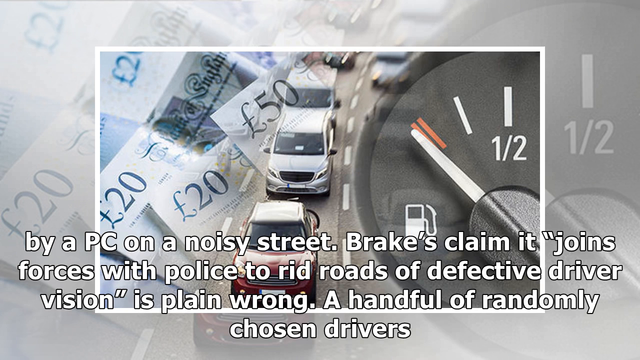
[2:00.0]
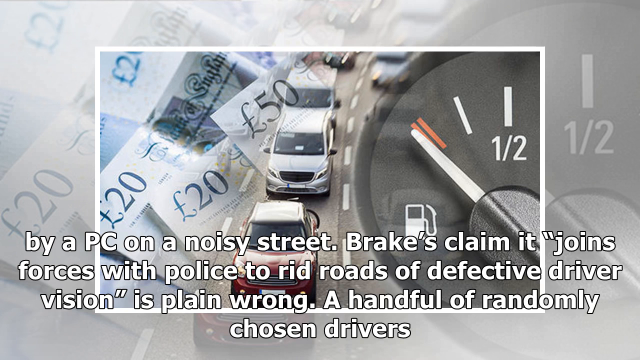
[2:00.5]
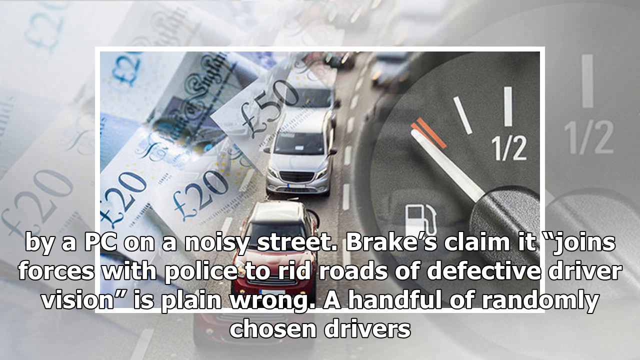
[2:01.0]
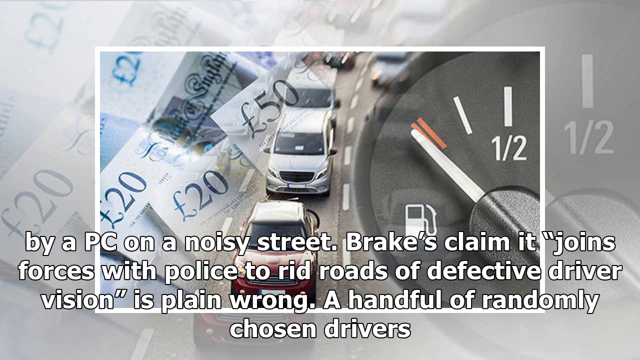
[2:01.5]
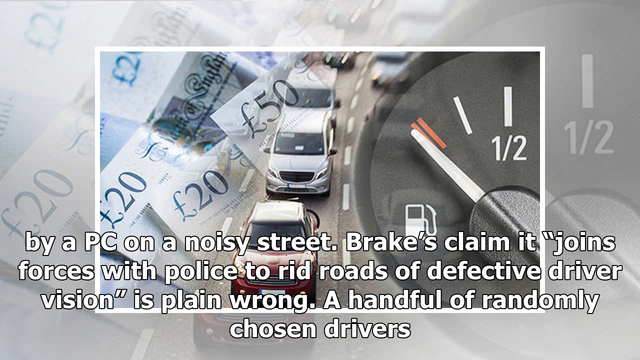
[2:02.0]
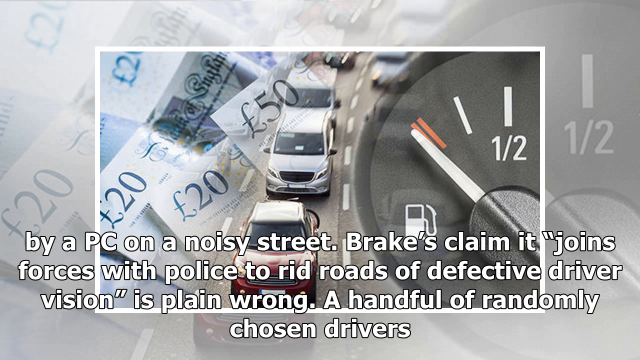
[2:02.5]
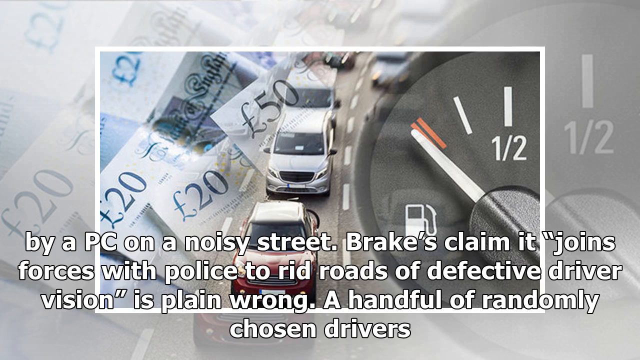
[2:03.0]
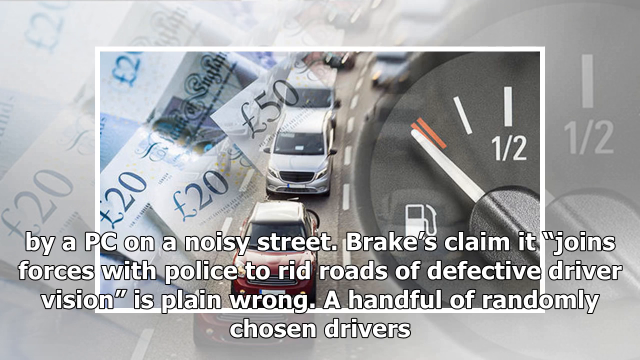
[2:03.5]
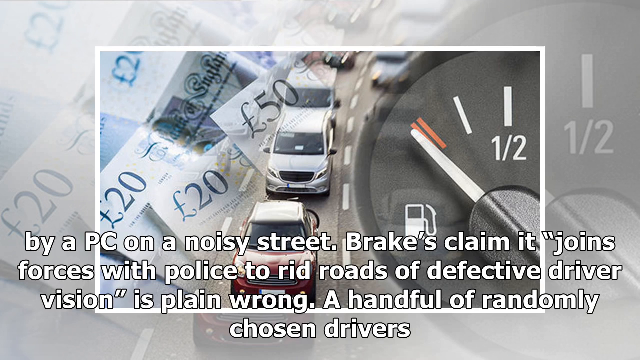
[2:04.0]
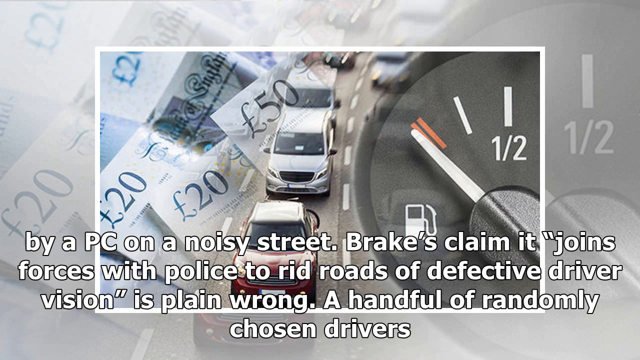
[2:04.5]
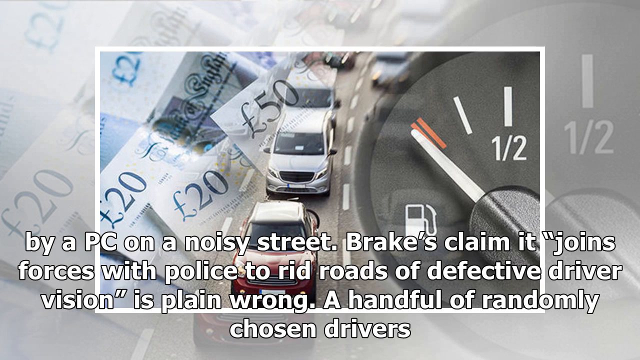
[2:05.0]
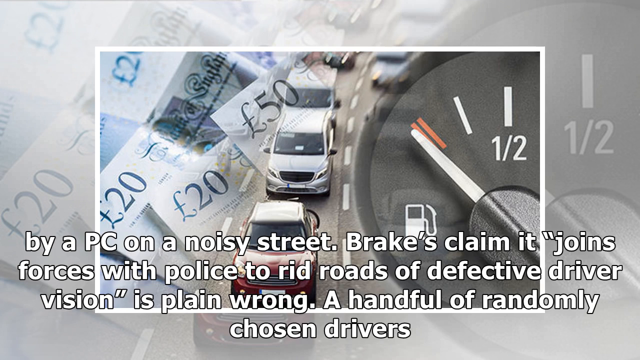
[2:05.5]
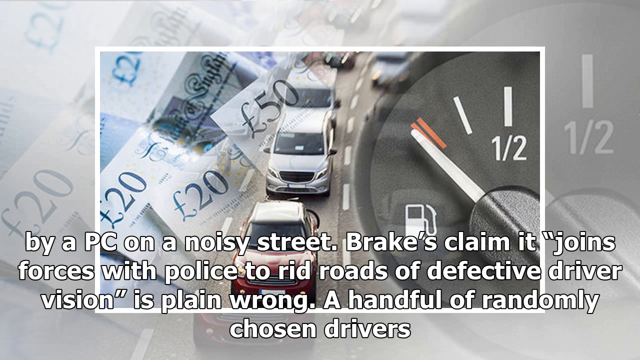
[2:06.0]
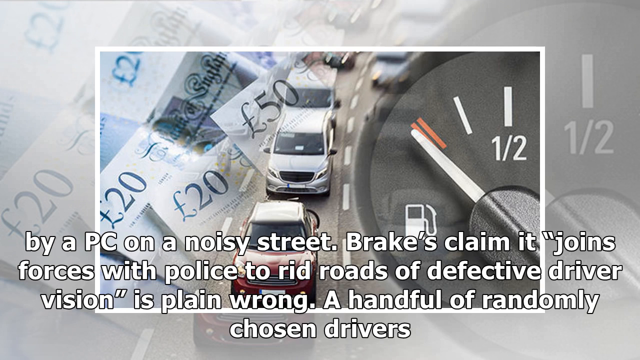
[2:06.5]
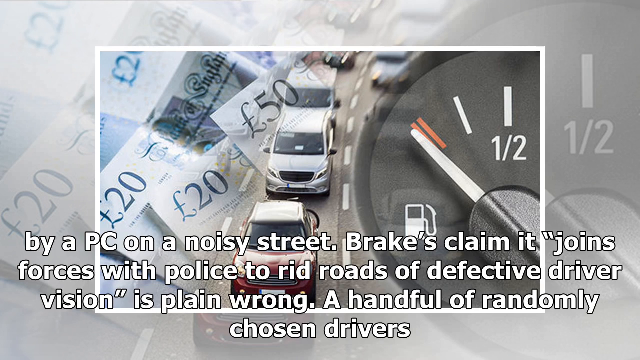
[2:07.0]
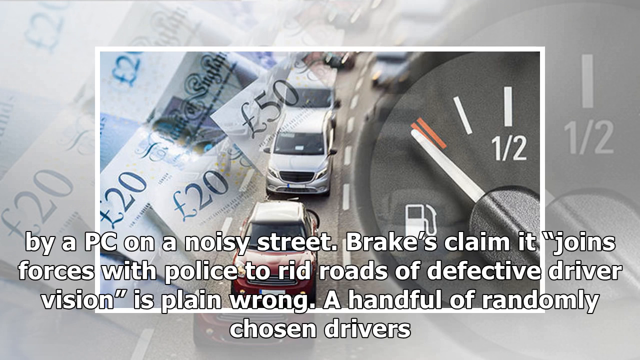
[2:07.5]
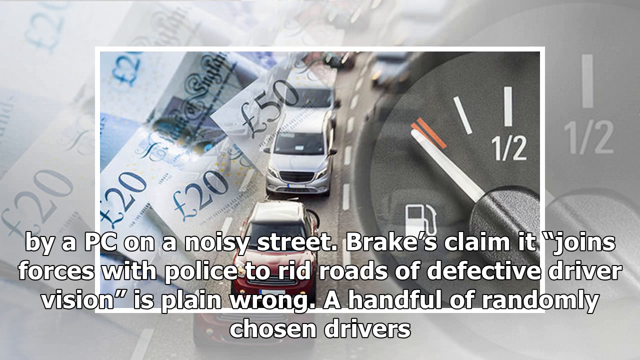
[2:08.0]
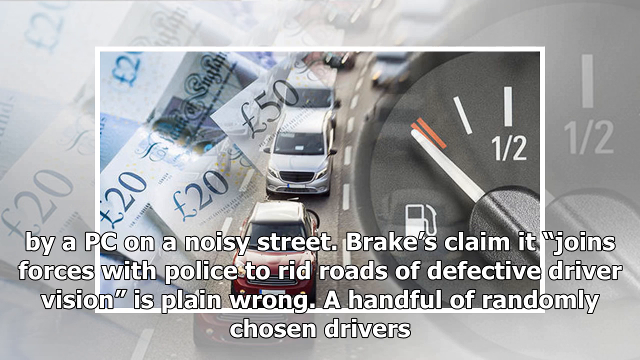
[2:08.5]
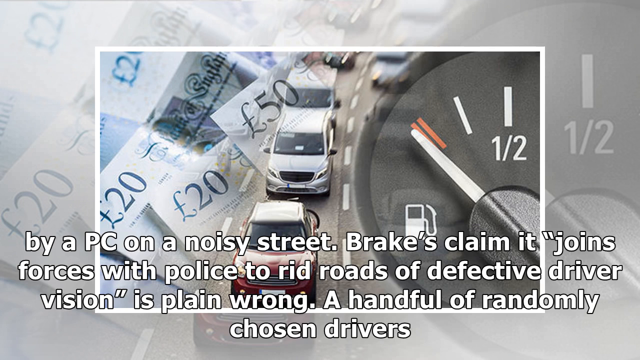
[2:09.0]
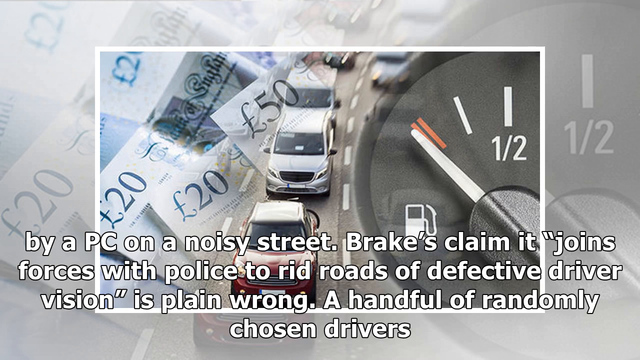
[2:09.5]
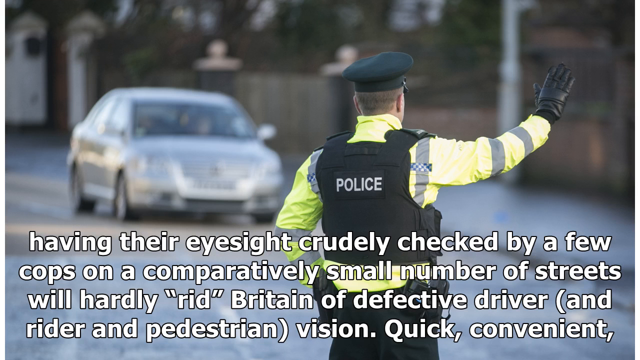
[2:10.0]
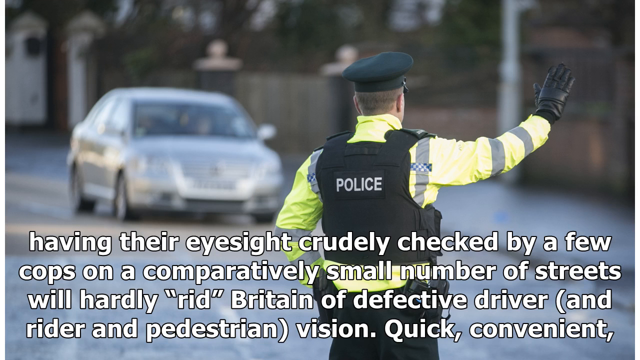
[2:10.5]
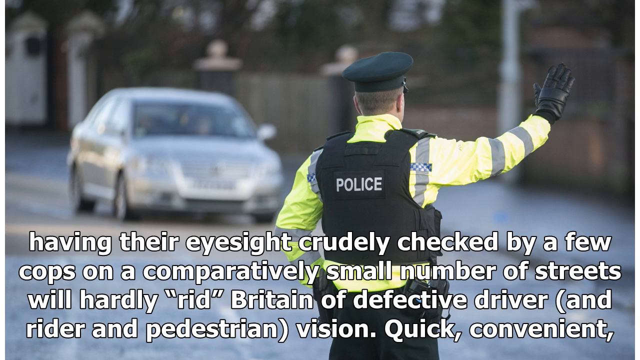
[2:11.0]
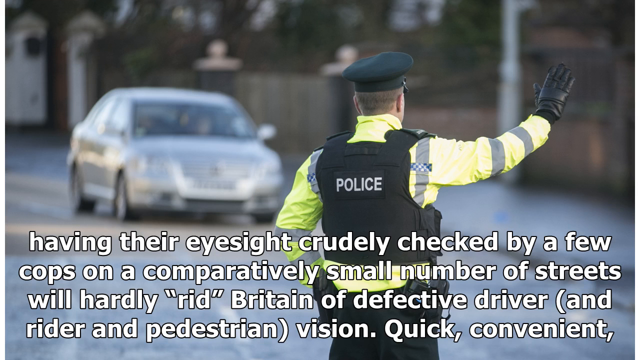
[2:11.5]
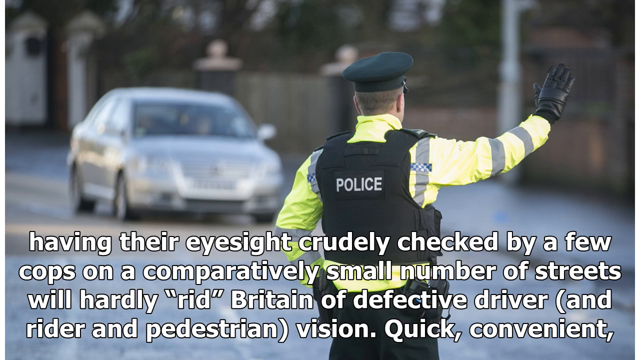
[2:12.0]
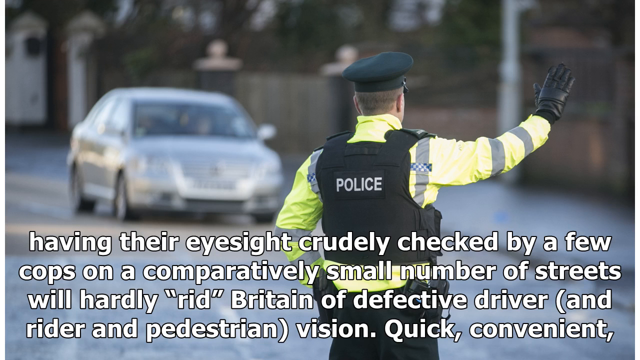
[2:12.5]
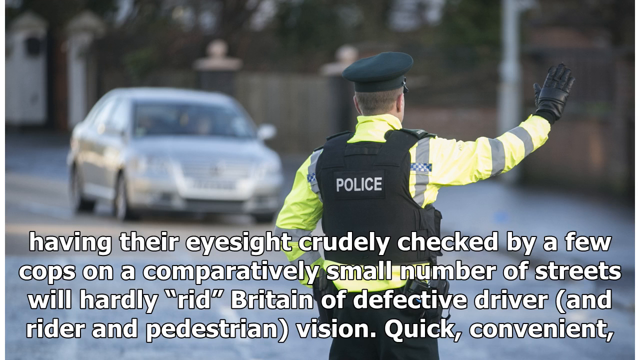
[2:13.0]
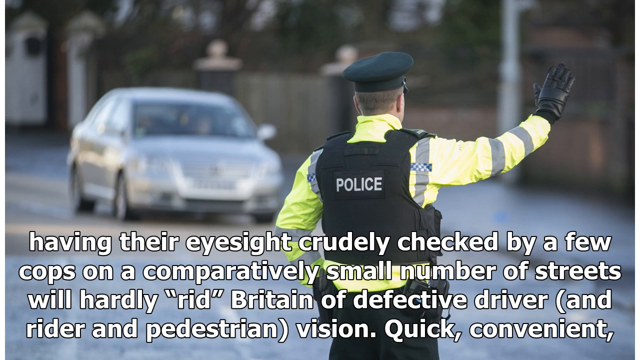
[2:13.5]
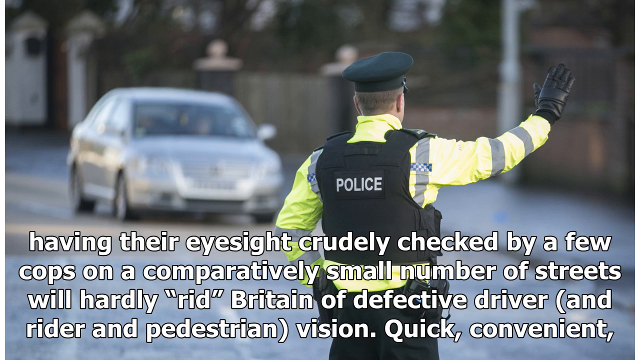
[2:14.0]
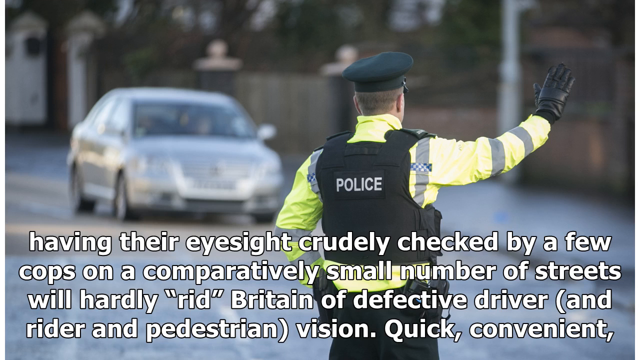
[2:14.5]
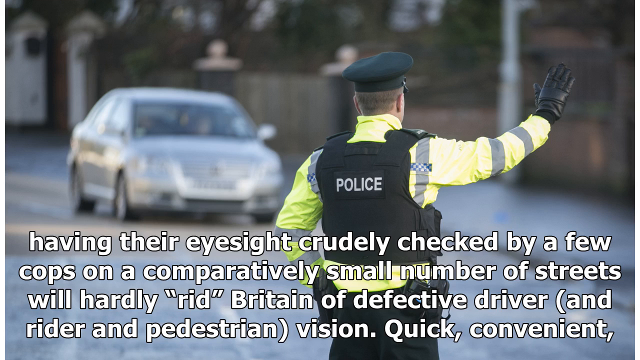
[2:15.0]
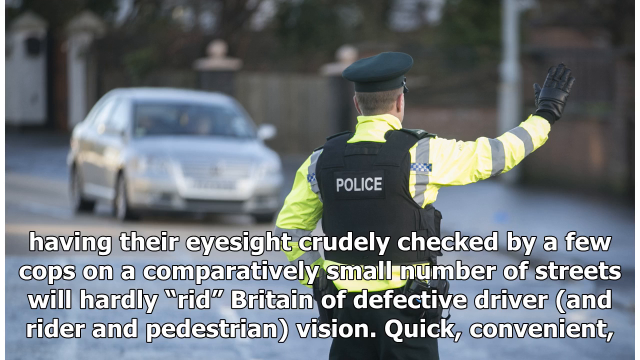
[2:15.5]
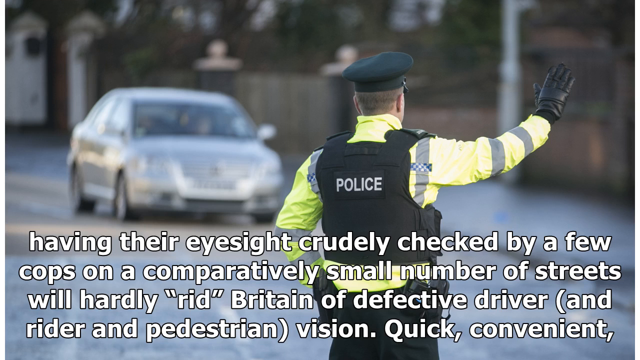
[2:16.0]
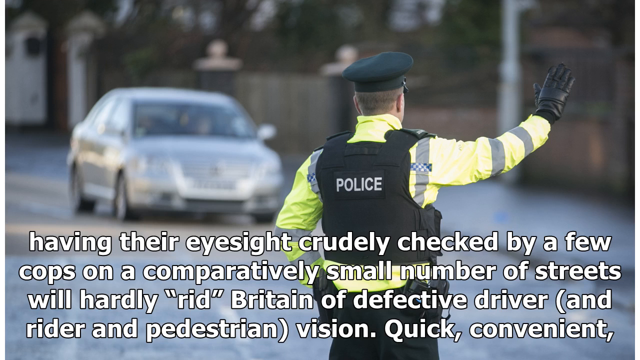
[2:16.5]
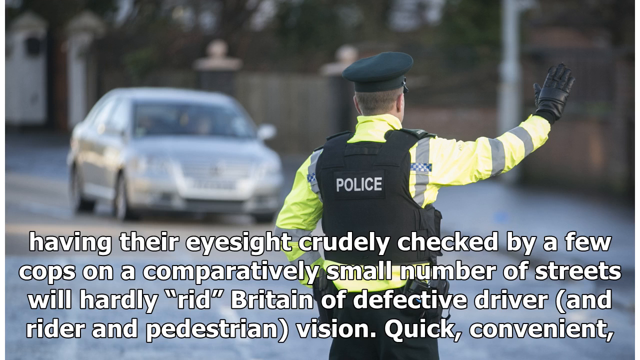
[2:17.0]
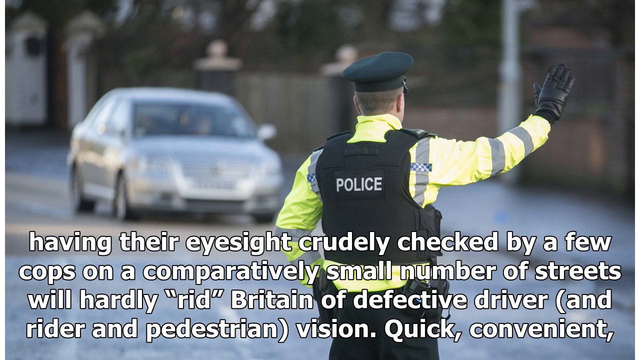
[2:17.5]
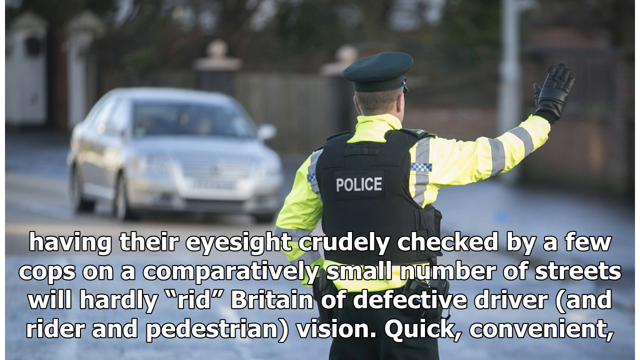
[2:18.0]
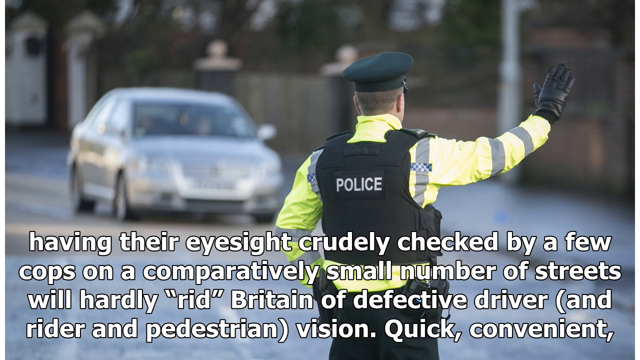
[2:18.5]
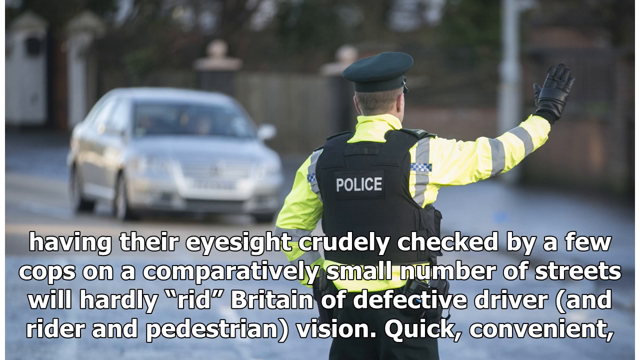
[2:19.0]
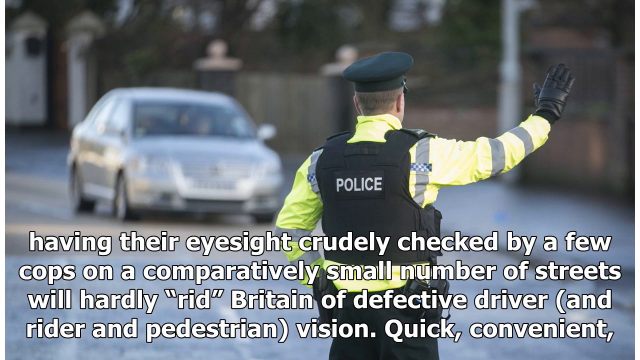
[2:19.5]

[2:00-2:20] Text mentions news delivered "by a PC on a noisy street," a claim of joining forces with police to rid roads of defective driver vision, and calls it "plain wrong" before cutting off. The backgrounds show pound bills and vehicles driving, including what looks like a police officer driving. A blonde woman in a vehicle, smiling, holds the letter R while talking to a person outside who holds the letter L; they are probably having a conversation, which looks polite because of the smiles.